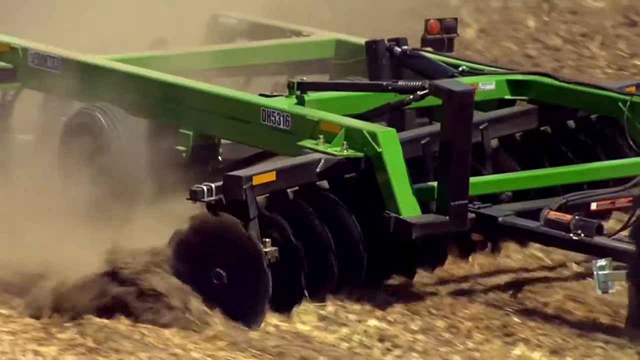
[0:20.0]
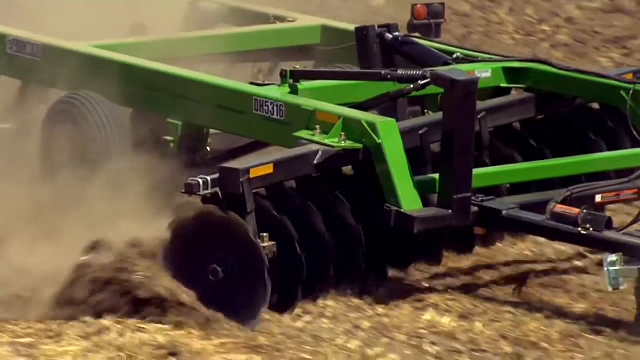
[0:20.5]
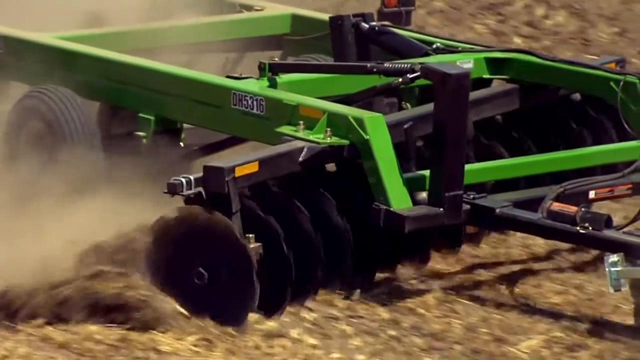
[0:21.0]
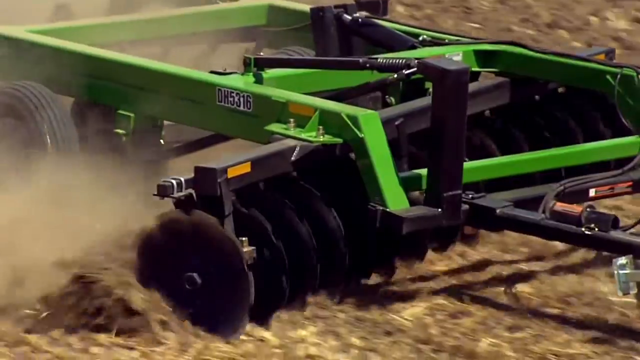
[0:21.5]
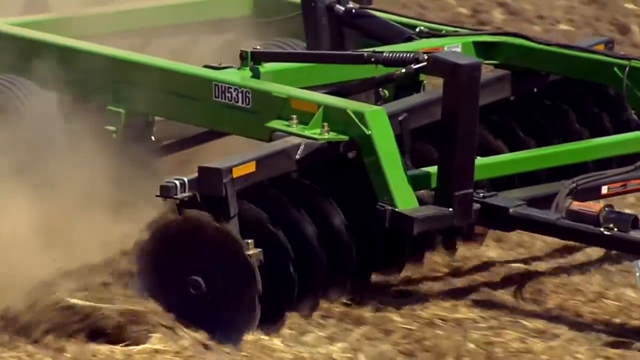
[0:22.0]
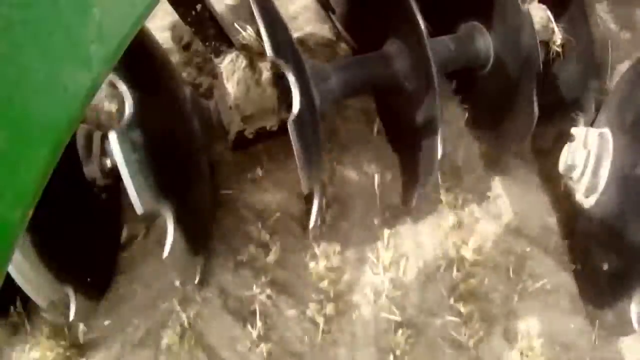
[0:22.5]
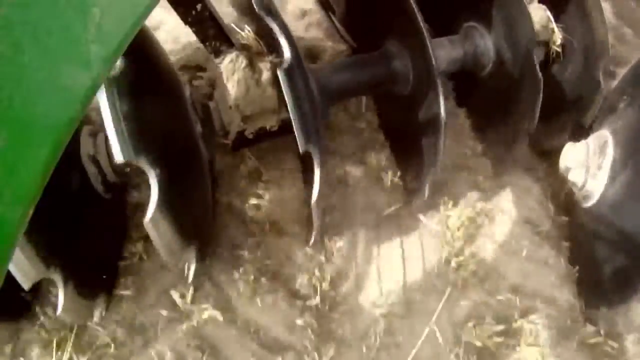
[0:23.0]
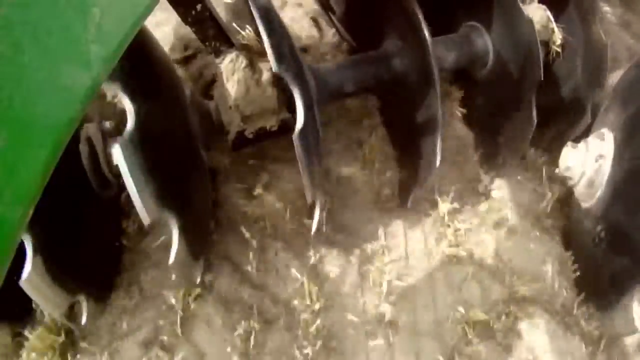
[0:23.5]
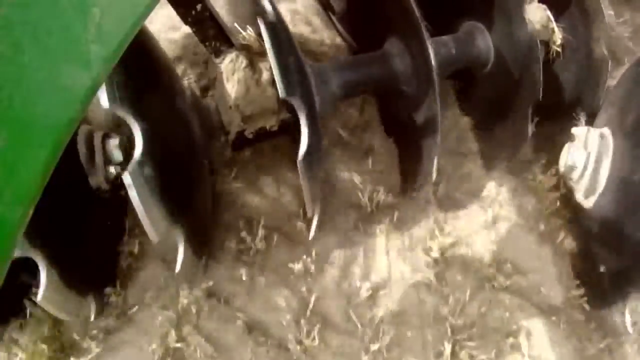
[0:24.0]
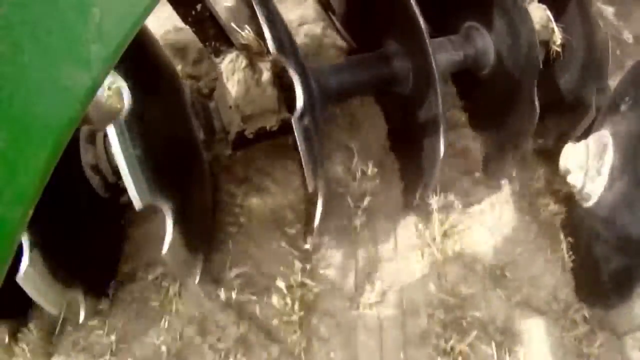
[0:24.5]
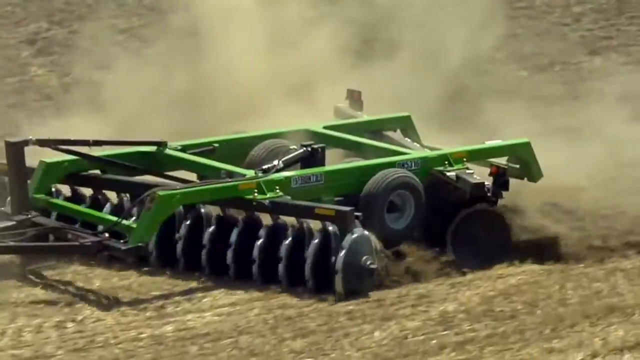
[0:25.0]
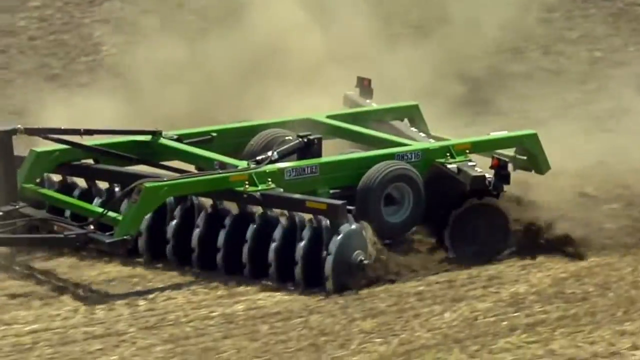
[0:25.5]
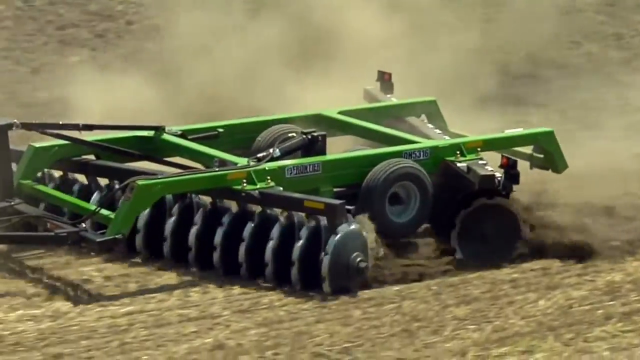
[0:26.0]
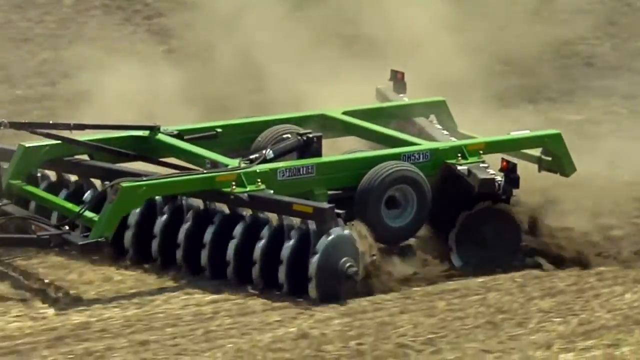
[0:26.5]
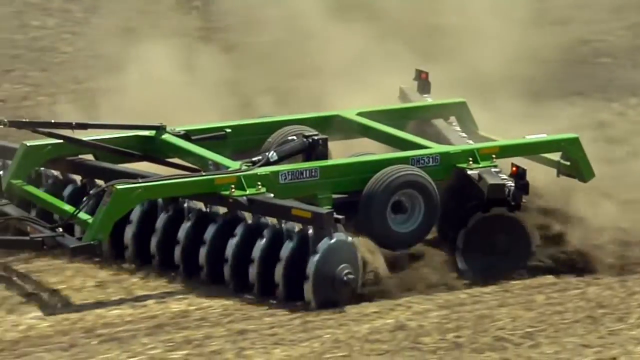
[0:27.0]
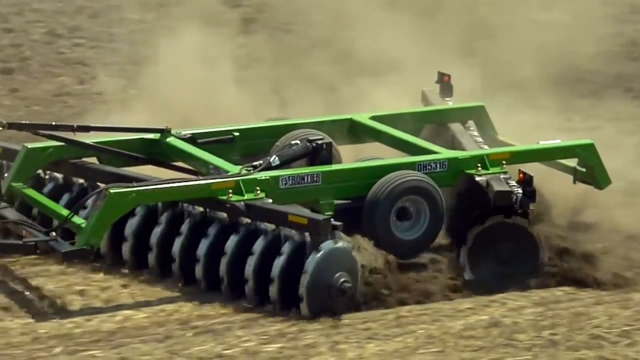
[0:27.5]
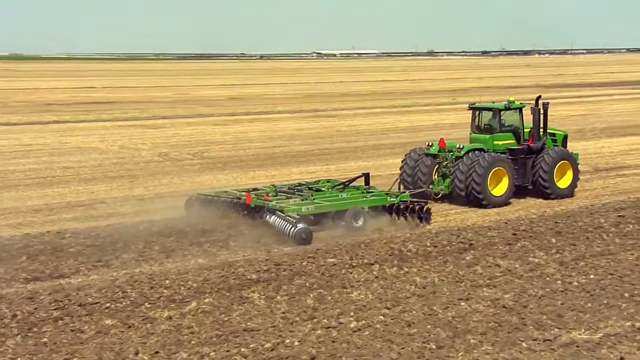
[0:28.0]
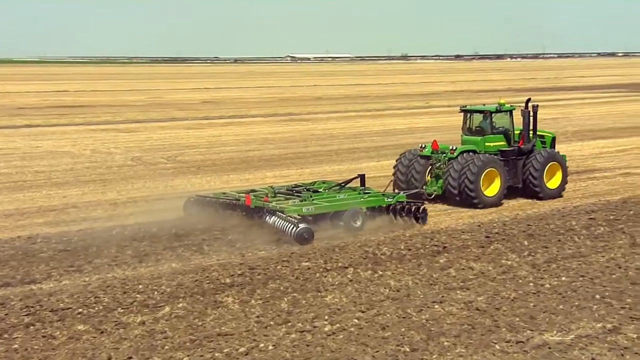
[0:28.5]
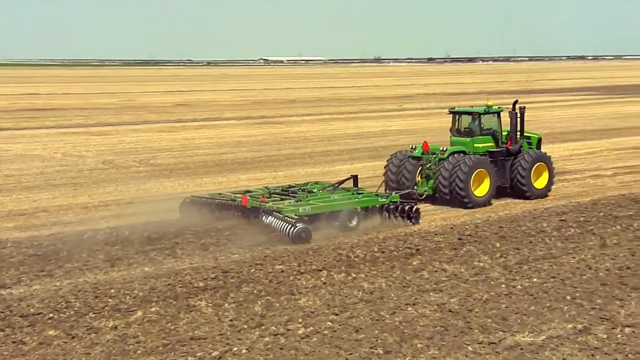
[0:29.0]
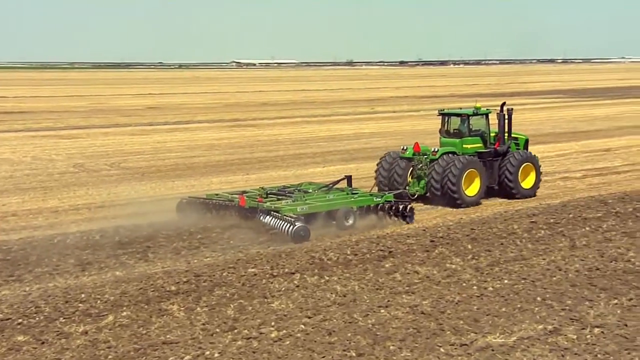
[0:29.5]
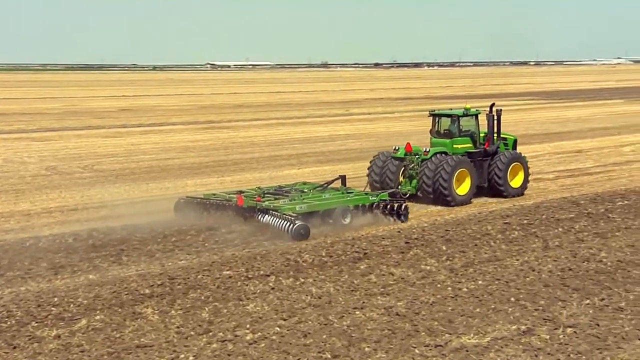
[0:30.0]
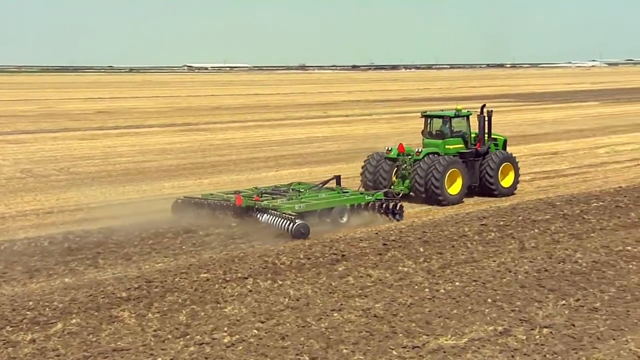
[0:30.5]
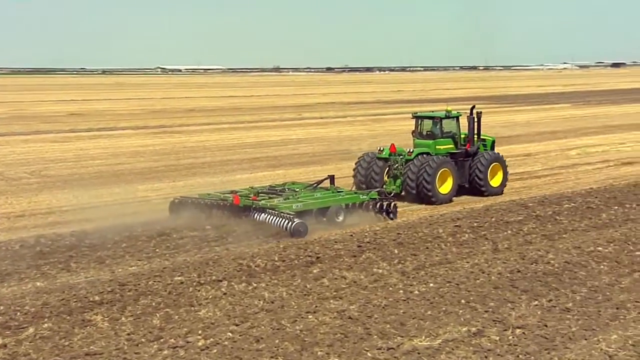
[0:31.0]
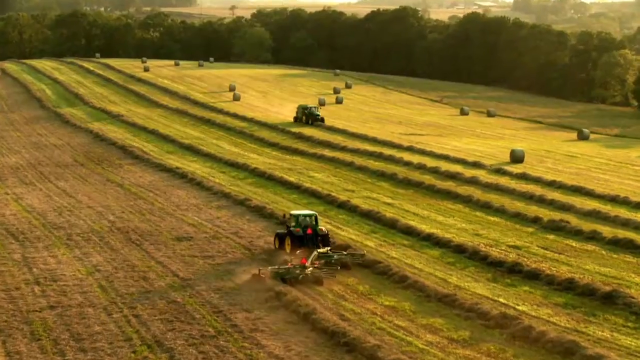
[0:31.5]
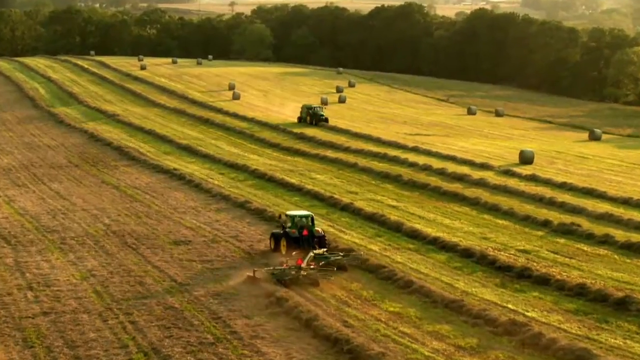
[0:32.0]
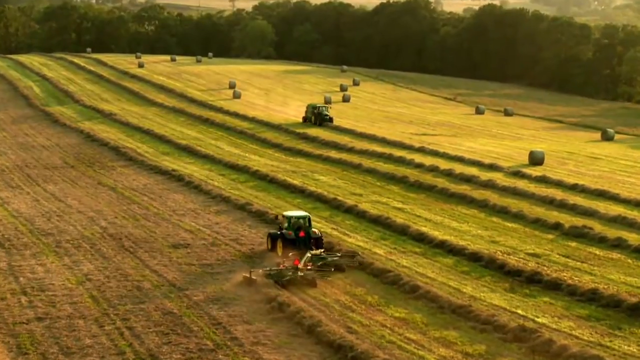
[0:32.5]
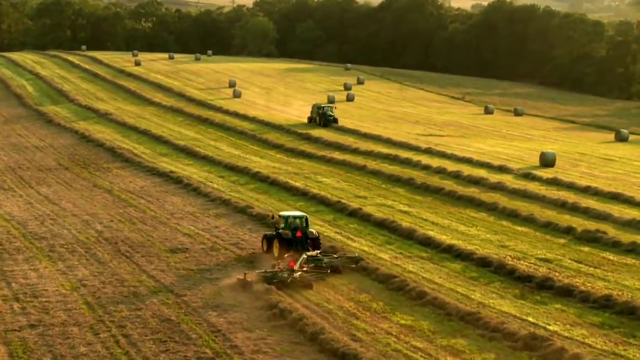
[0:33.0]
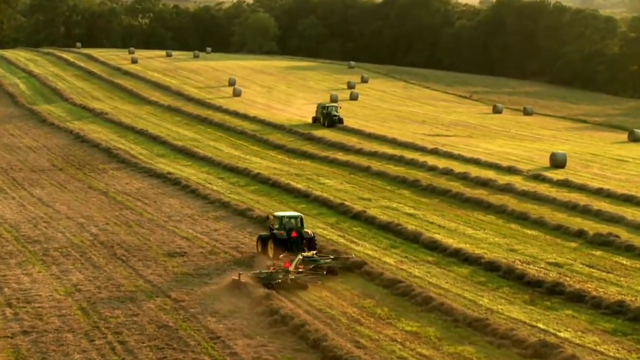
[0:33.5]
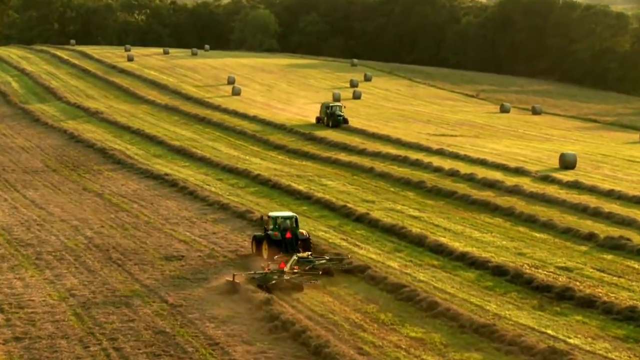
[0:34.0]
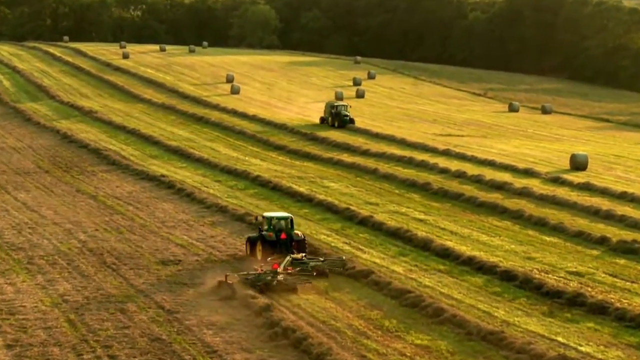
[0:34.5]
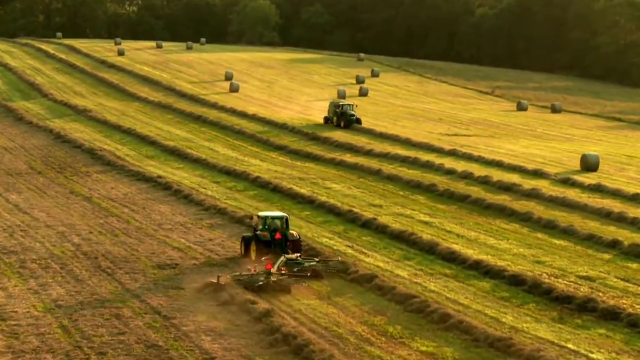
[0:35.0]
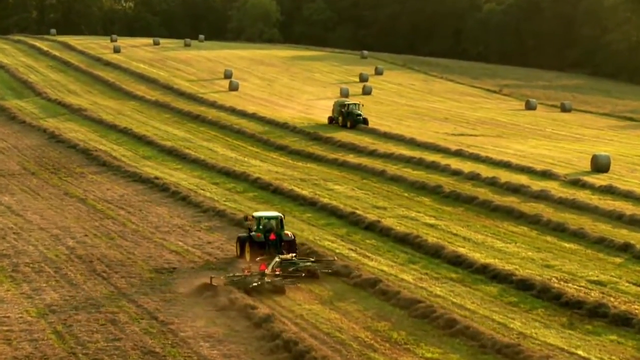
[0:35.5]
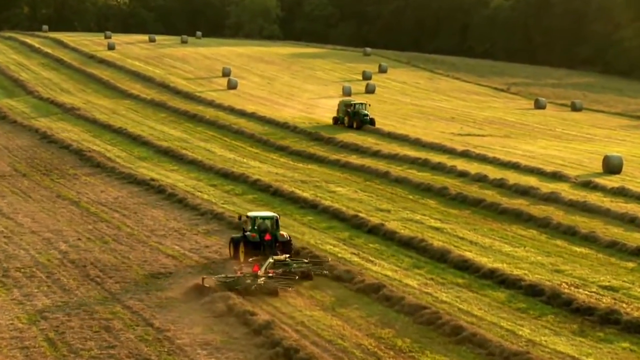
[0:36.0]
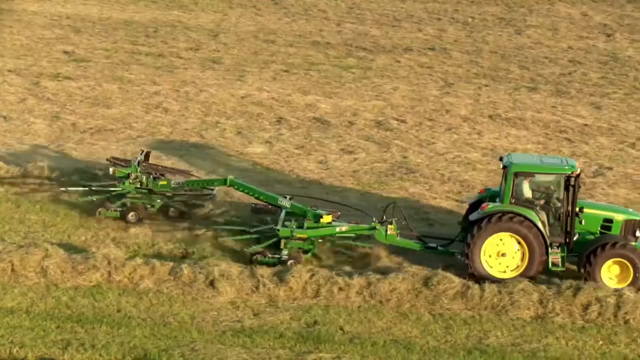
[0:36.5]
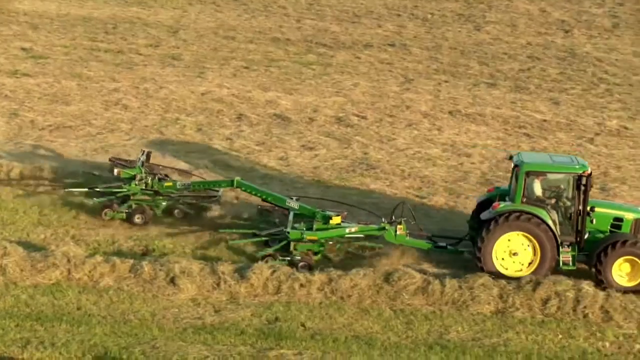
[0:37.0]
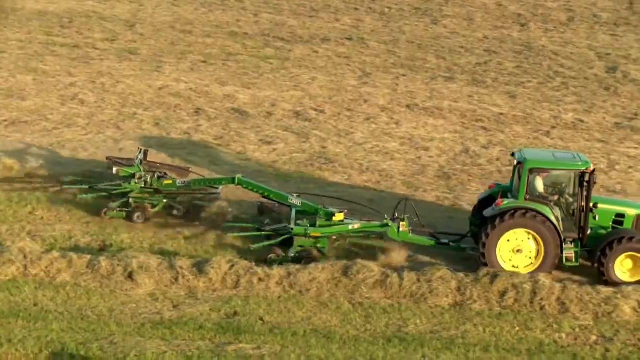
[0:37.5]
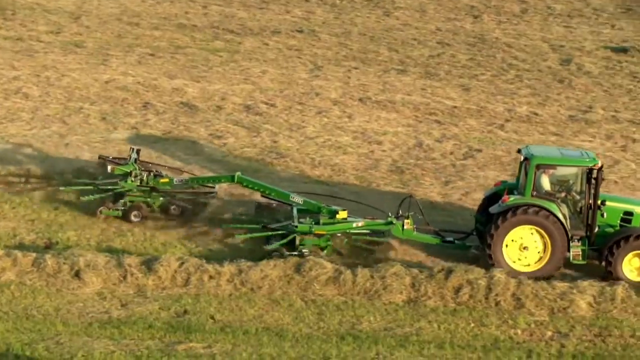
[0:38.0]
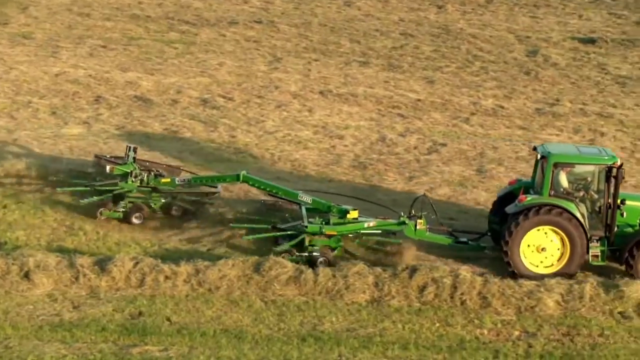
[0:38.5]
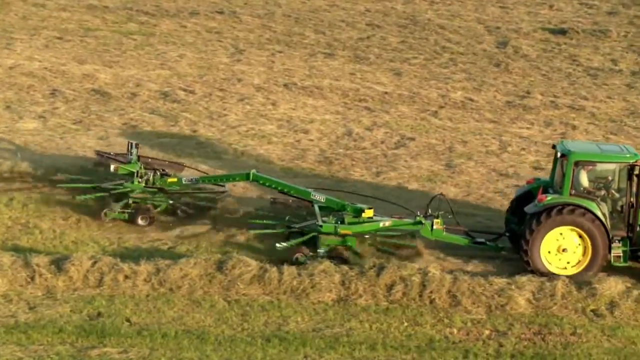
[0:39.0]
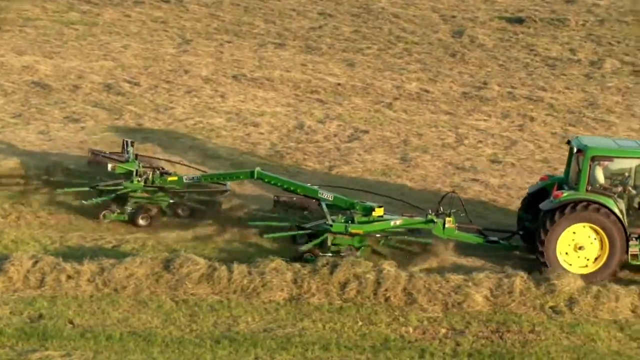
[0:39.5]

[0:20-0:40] A big green machine runs through the fields of a farm. A close-up shows that instead of wheels it has some sort of metal rounded blades that break up the earth. A green tractor pushes the machine across the field, and an aerial view of this appears at the top right of the screen. A landscape of much greener grass on a field follows, with another vehicle passing by that seems to be harvesting, and big dark green trees in the background. The scene ends with a tractor driving through a field with machines attached to the back whose blades keep spinning at all times, working the ground.